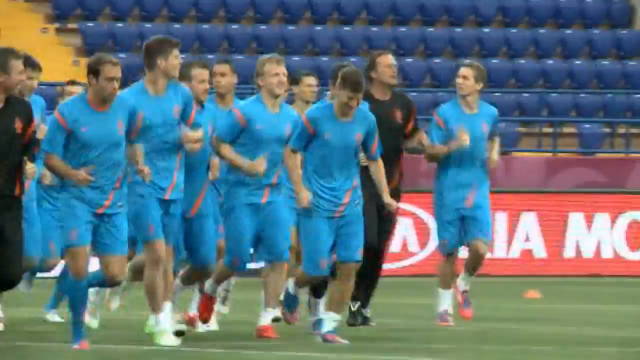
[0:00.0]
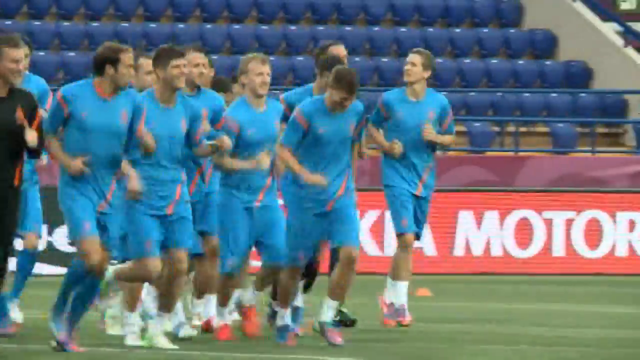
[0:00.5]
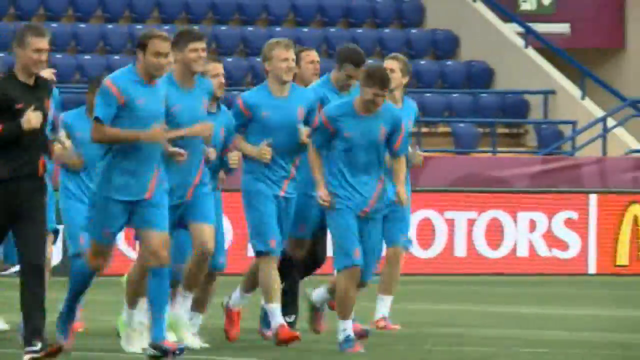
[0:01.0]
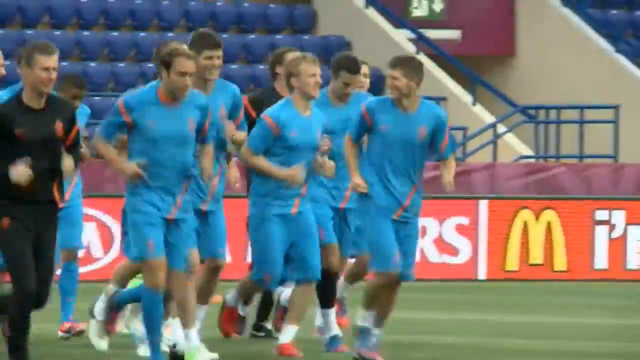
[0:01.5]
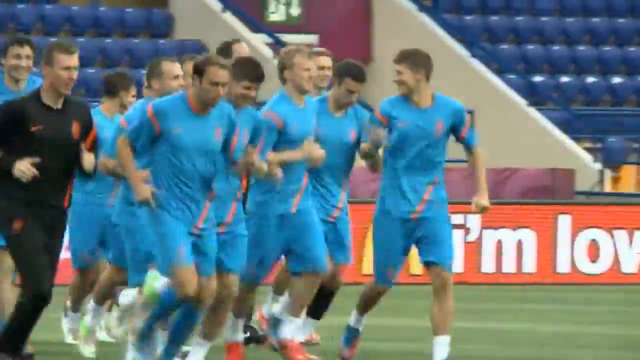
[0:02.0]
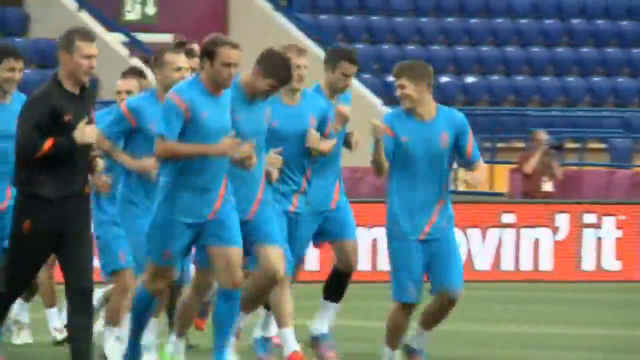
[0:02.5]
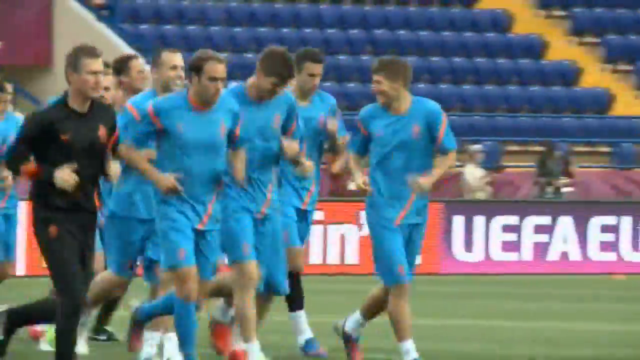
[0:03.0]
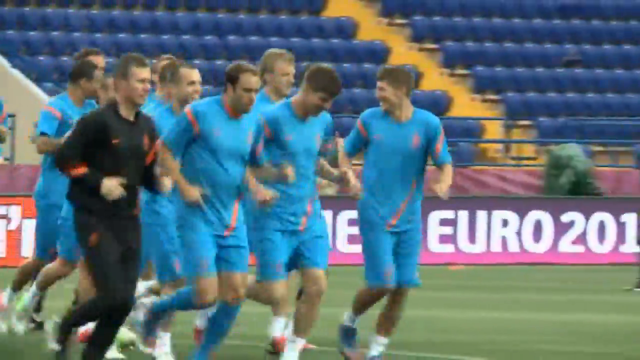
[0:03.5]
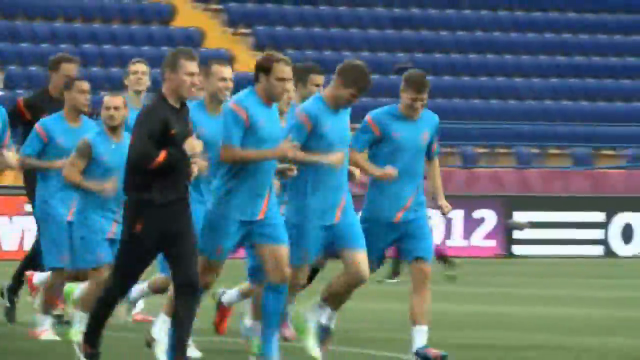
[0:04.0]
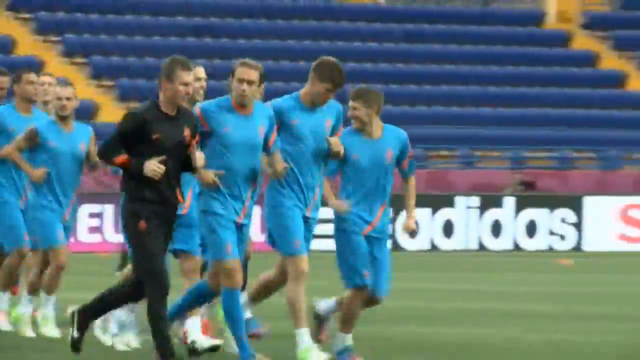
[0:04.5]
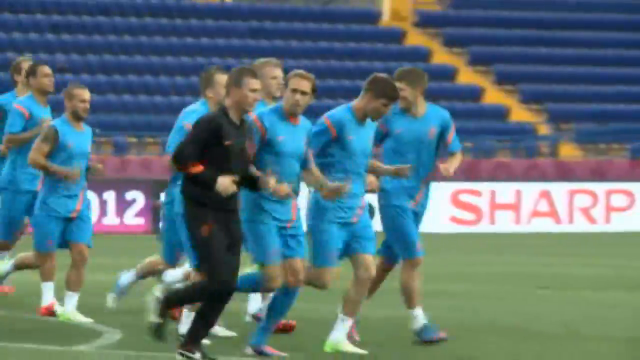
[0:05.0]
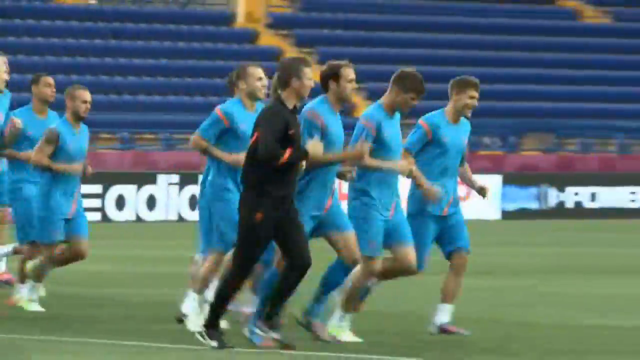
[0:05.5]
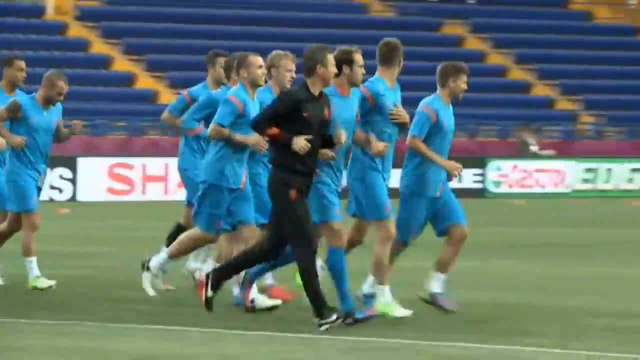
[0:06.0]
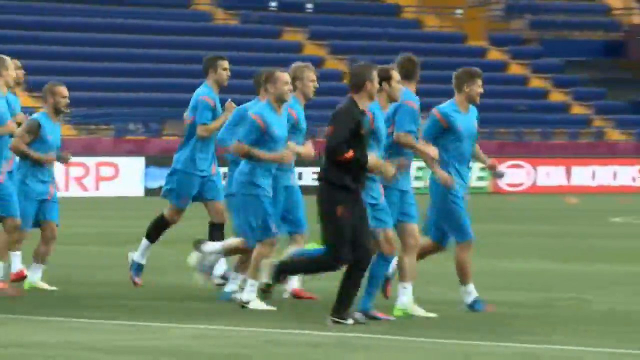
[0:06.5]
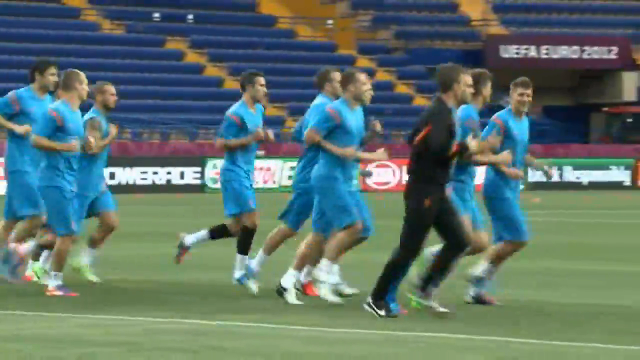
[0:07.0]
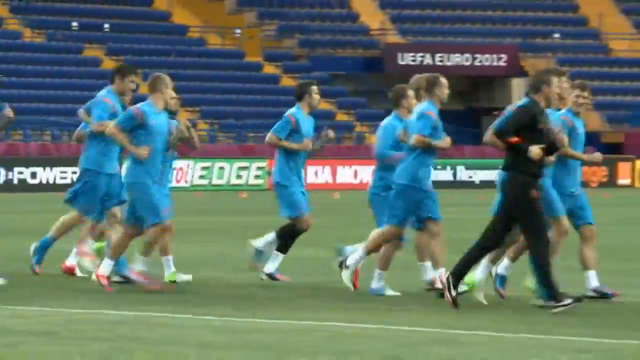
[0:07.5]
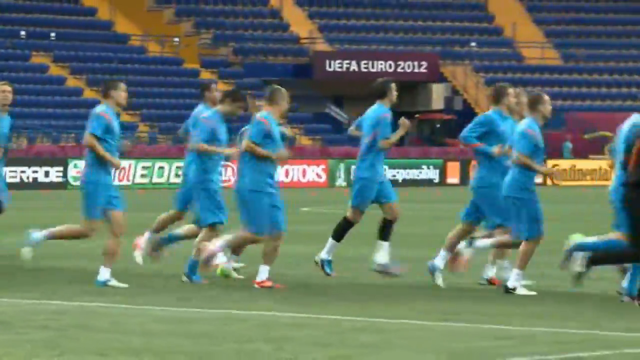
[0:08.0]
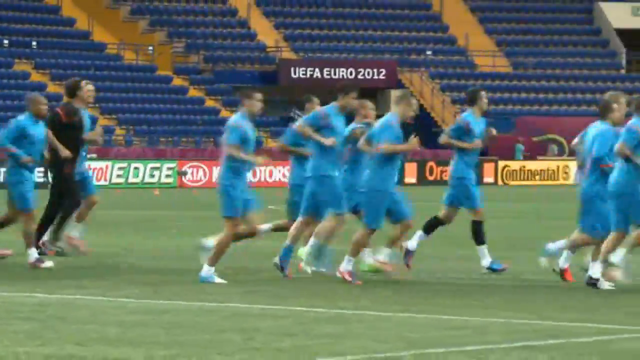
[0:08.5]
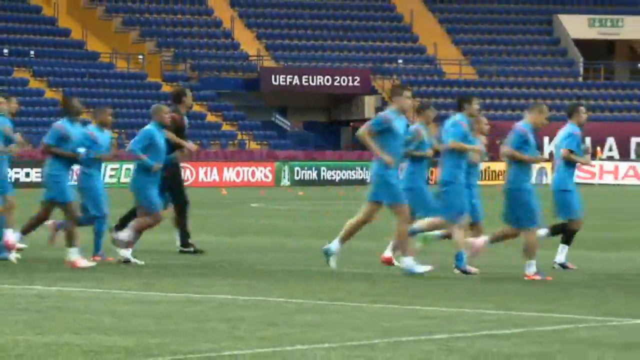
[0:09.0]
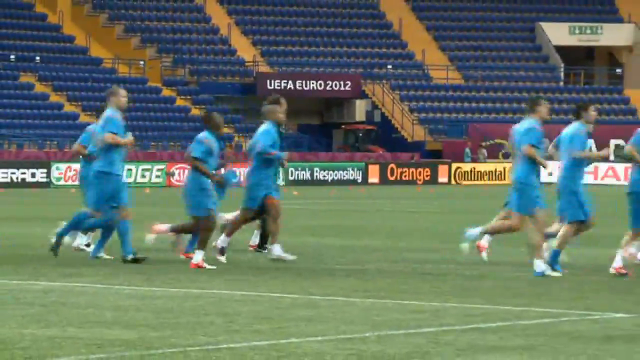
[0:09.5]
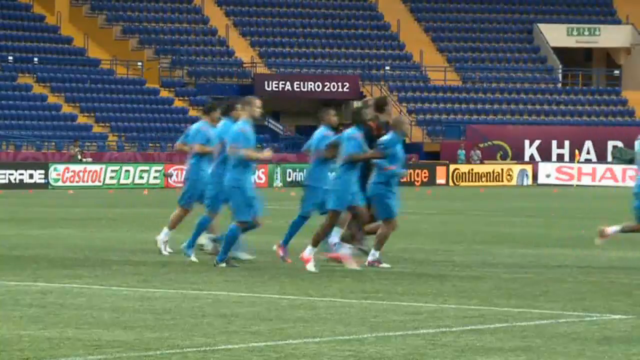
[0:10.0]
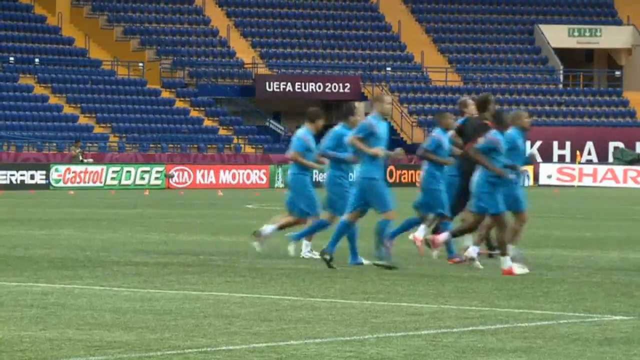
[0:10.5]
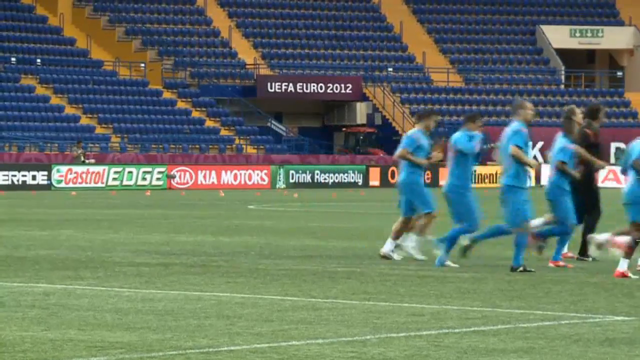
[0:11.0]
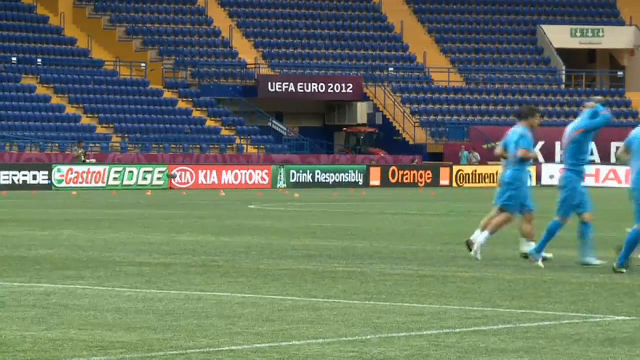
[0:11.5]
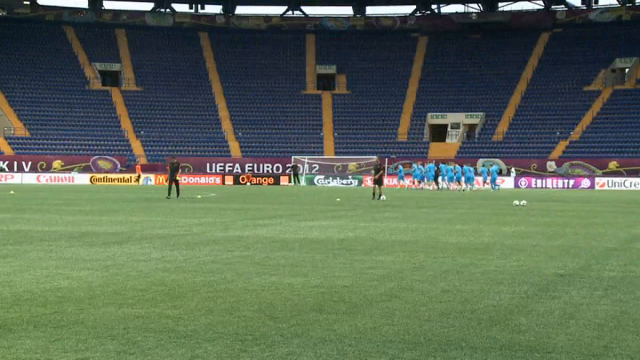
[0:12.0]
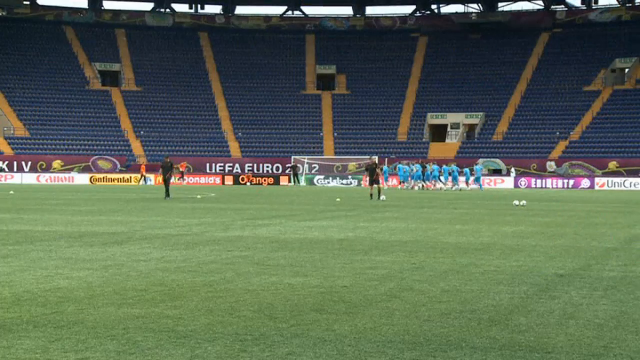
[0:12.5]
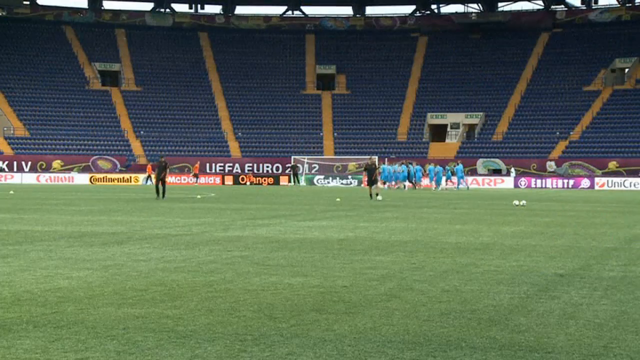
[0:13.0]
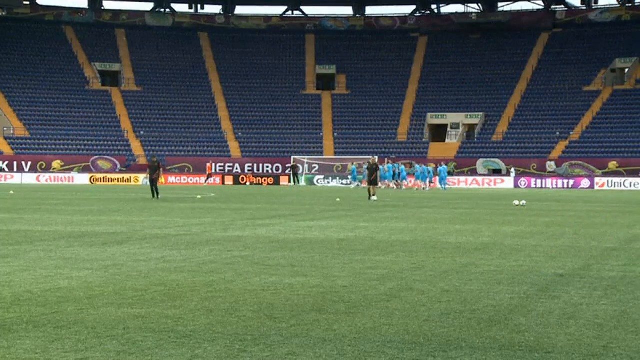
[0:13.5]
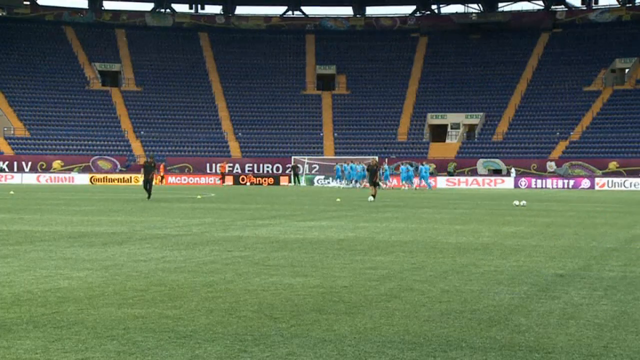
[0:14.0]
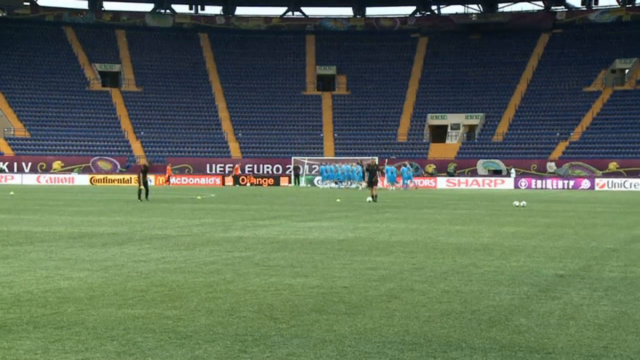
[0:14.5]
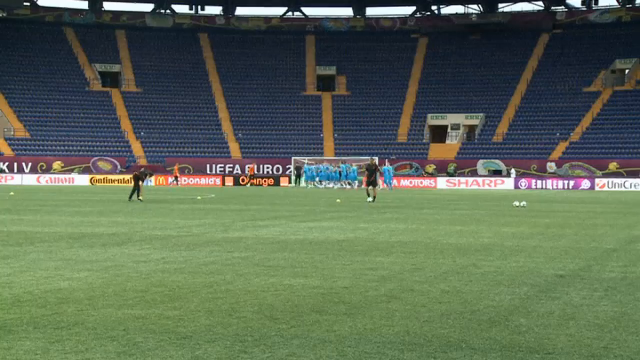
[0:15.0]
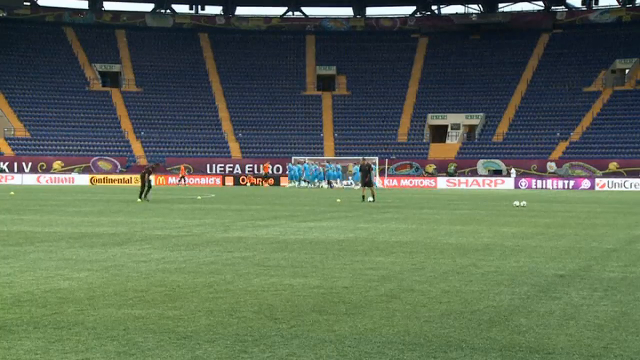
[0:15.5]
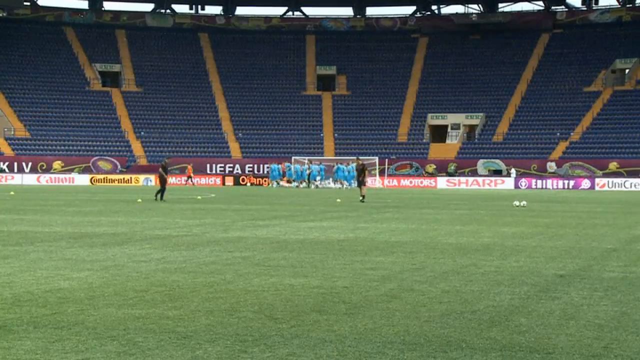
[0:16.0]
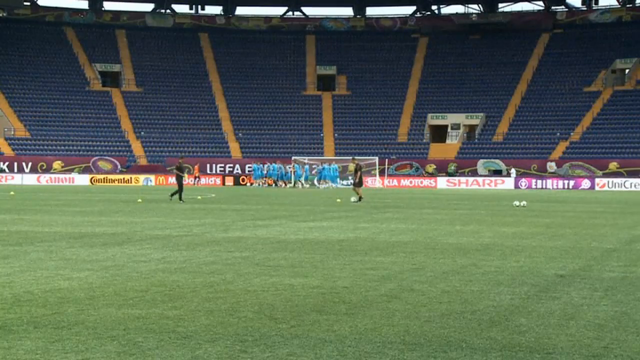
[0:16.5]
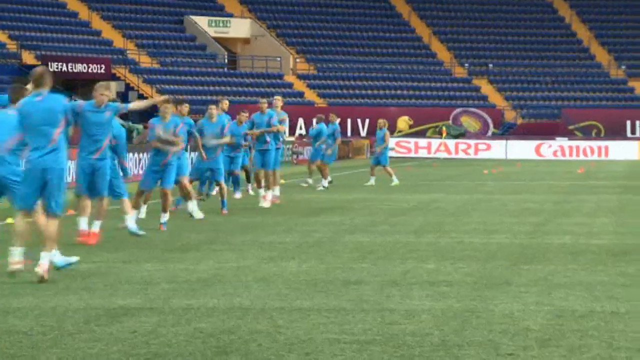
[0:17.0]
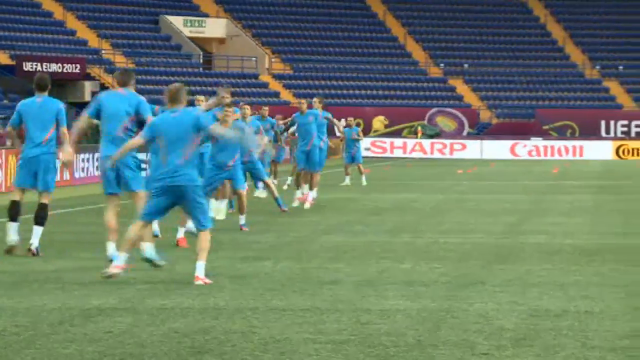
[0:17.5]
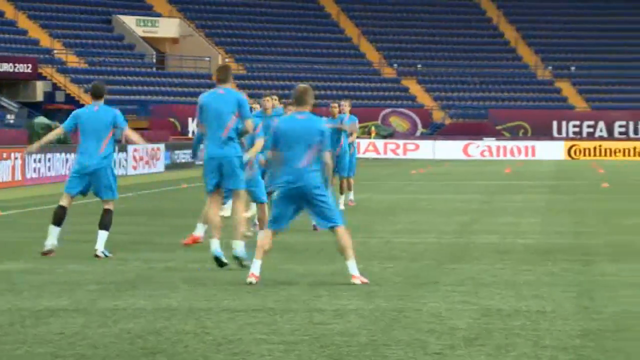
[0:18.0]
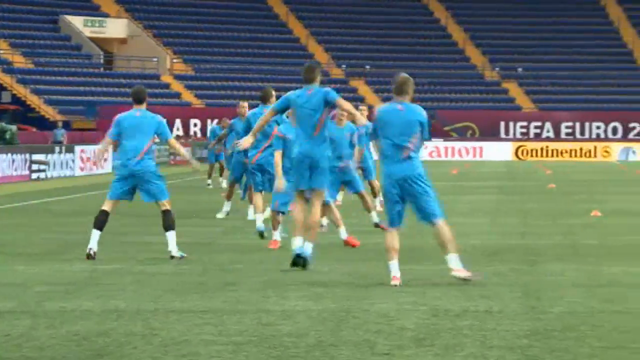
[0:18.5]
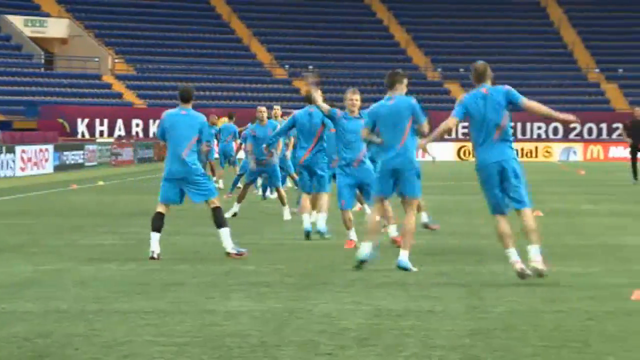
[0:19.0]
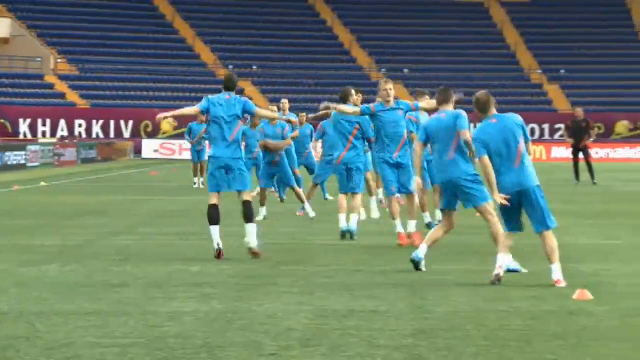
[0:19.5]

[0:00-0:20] A team in blue jerseys jogs onto the field of an empty stadium. They wear short-sleeve shirts and shorts, and most of them have some type of leg braces on. They jog into the middle of the field. A distant, wide view shows either their coaches or trainers in the middle of the field, with a few soccer balls on the ground, as the players in light blue jerseys jog across the goal to the left side. The players then move side to side, swinging their arms up and down; it looks like a warm-up for a game or a practice. One of the banners says "UEFA Euro 2012", and the names of different sponsors are lined up around the field, including Continental, Kia Motors and Castrol. The team cannot be identified, but since the players are mostly very light-skinned, it is probably one of the European teams.